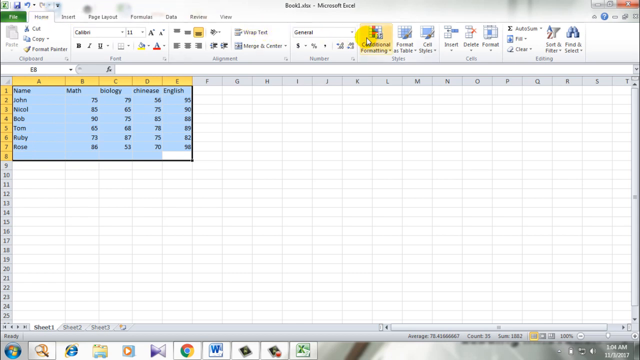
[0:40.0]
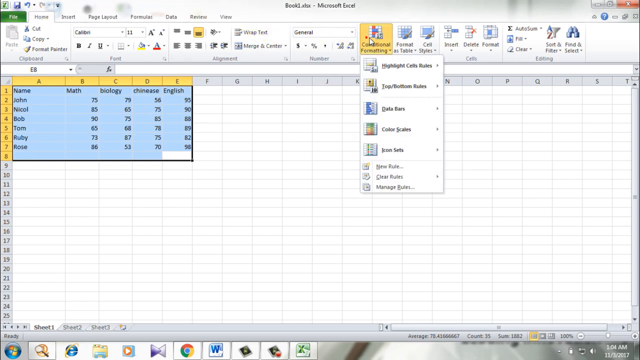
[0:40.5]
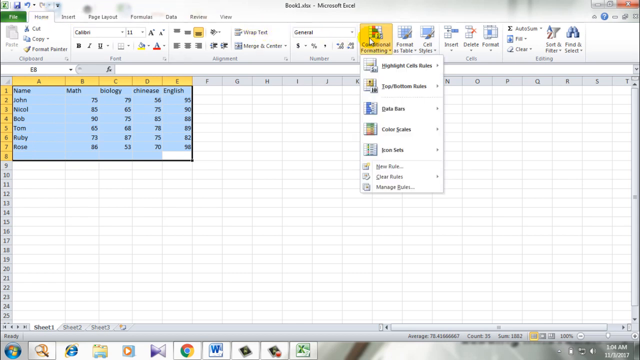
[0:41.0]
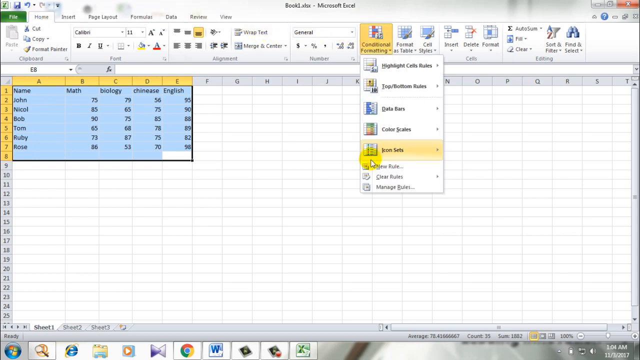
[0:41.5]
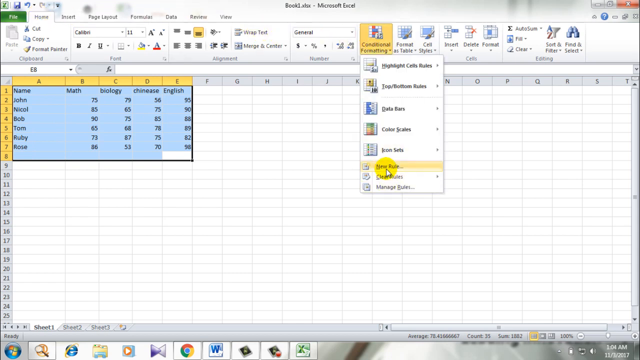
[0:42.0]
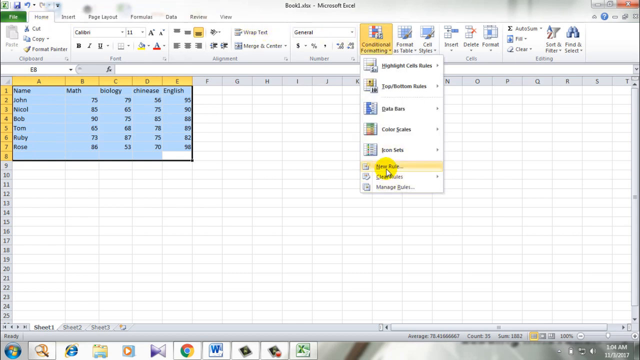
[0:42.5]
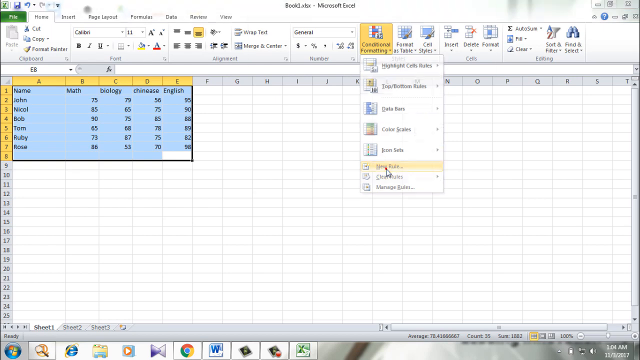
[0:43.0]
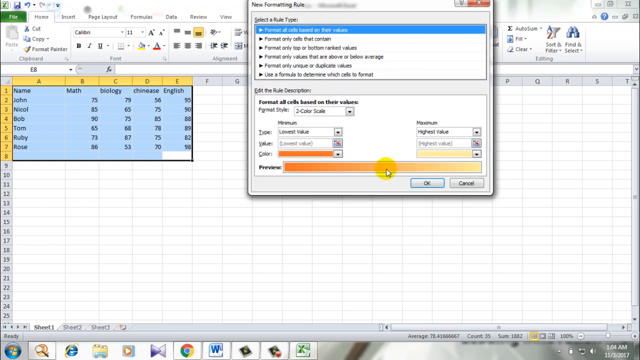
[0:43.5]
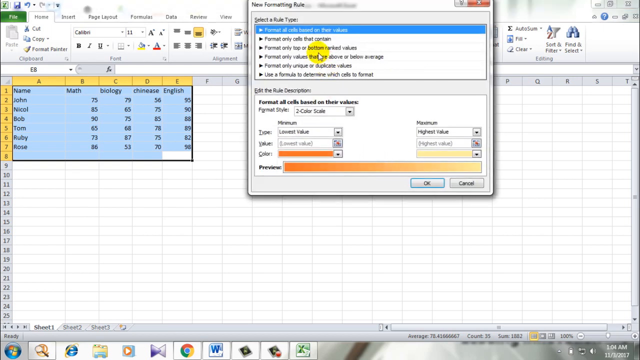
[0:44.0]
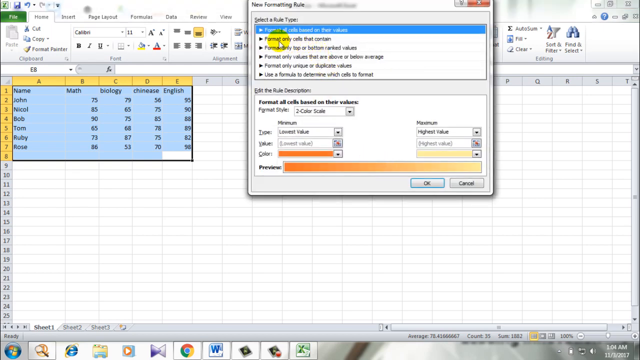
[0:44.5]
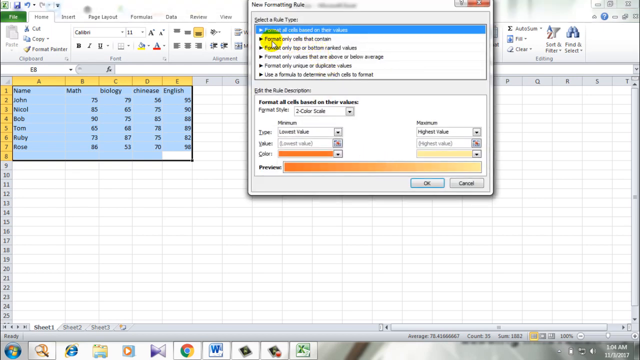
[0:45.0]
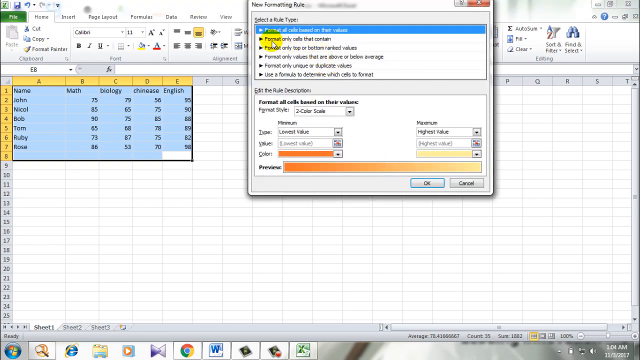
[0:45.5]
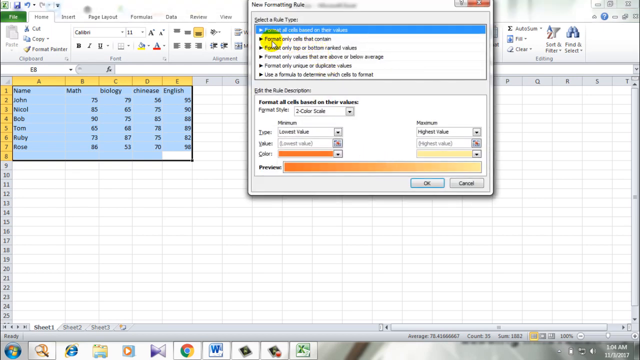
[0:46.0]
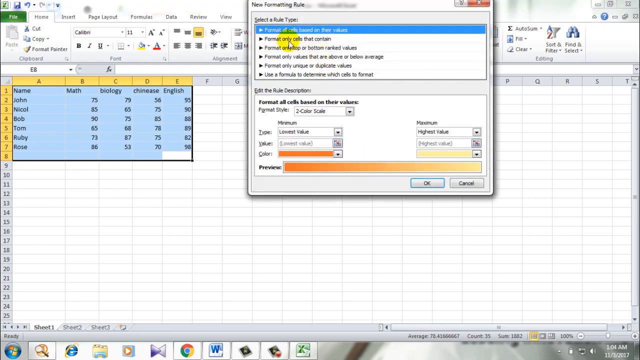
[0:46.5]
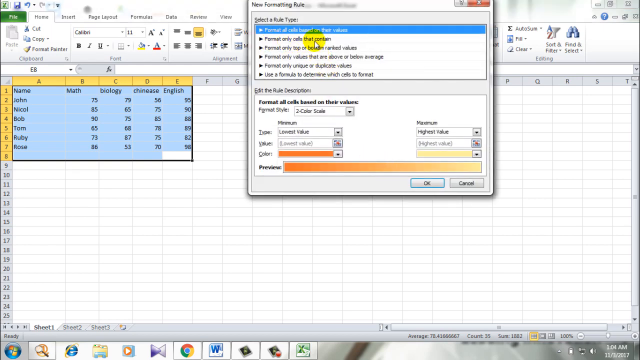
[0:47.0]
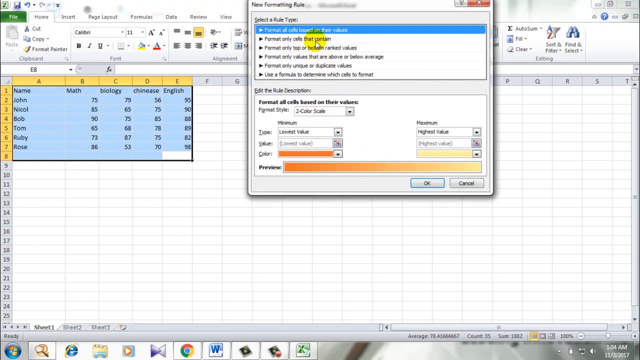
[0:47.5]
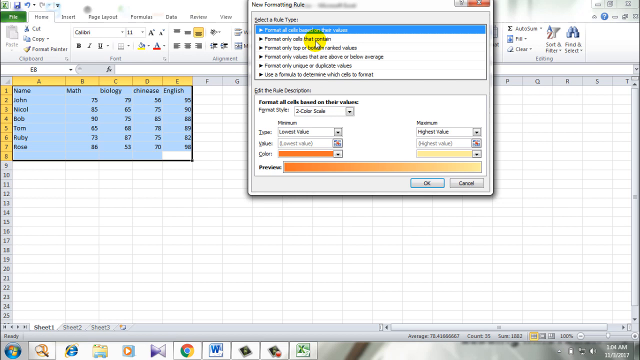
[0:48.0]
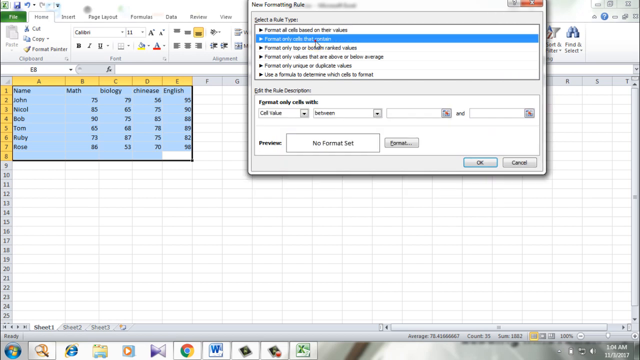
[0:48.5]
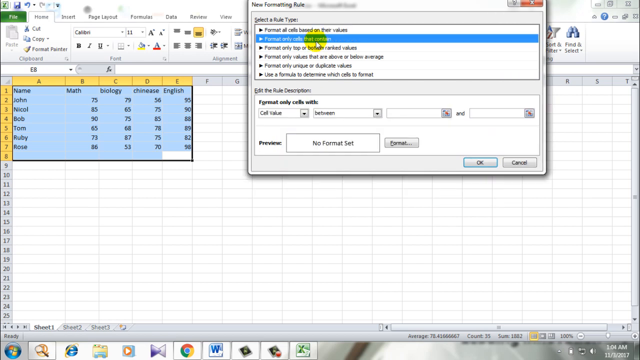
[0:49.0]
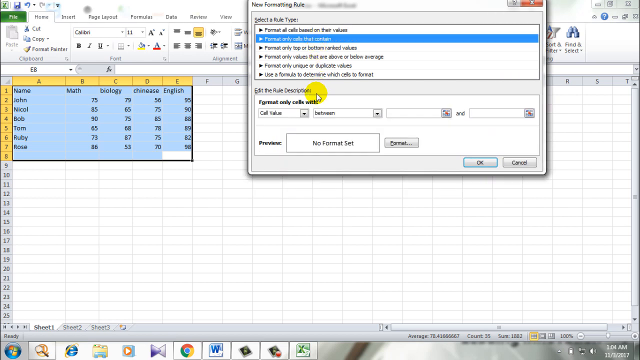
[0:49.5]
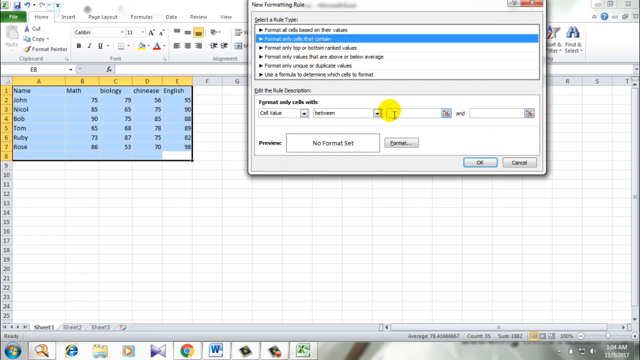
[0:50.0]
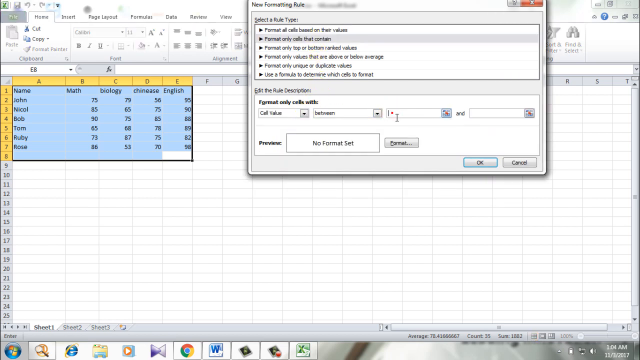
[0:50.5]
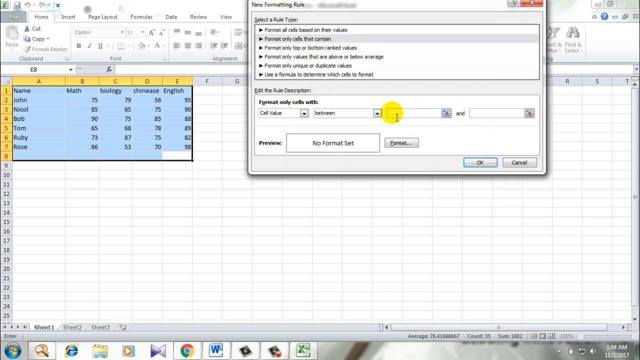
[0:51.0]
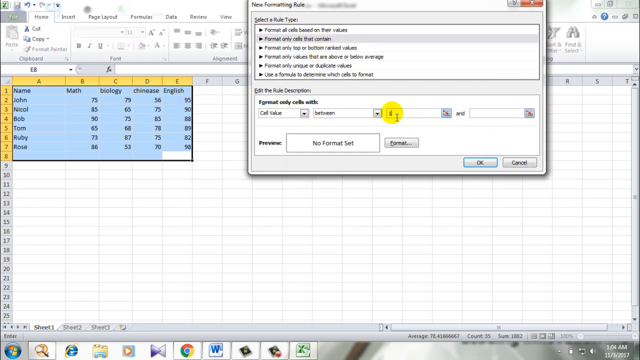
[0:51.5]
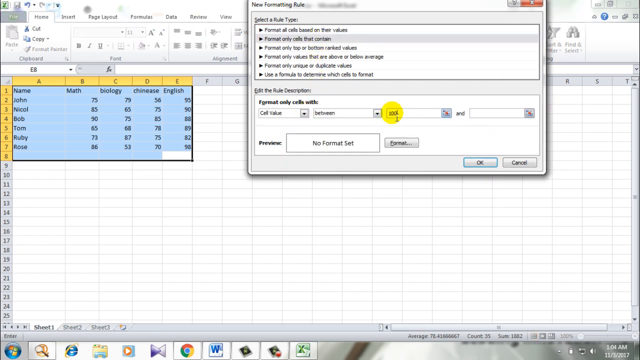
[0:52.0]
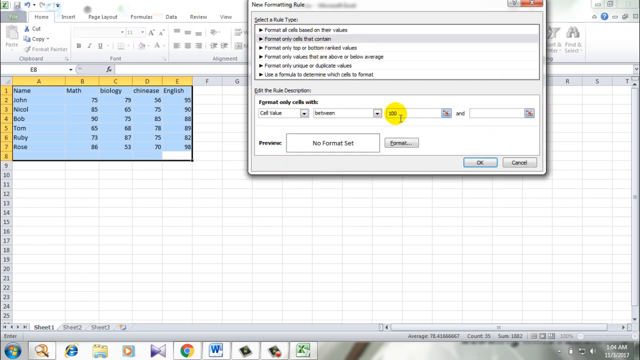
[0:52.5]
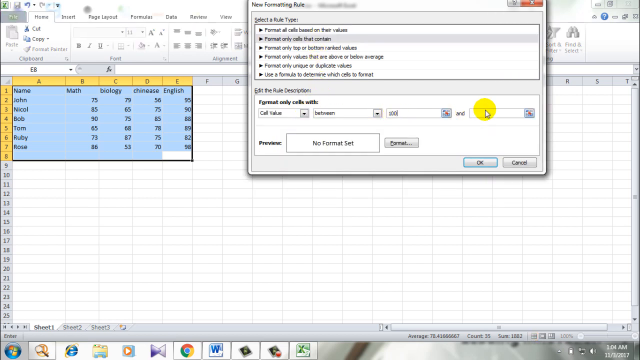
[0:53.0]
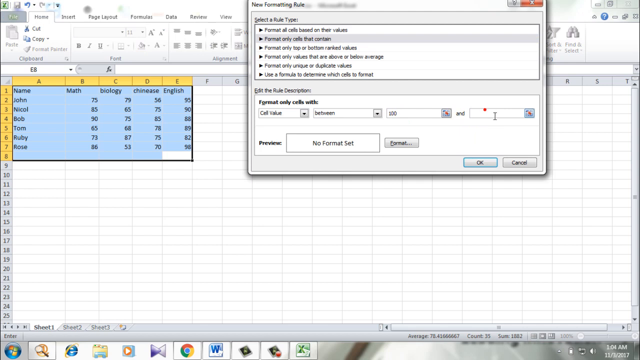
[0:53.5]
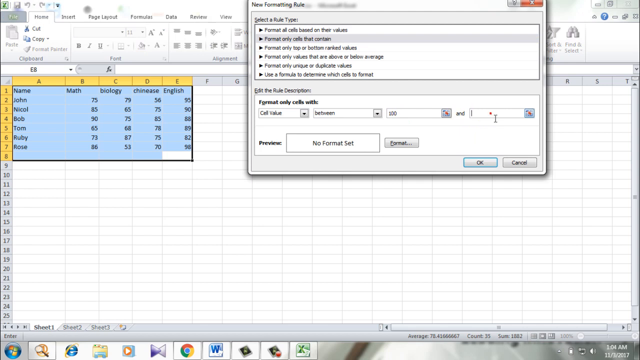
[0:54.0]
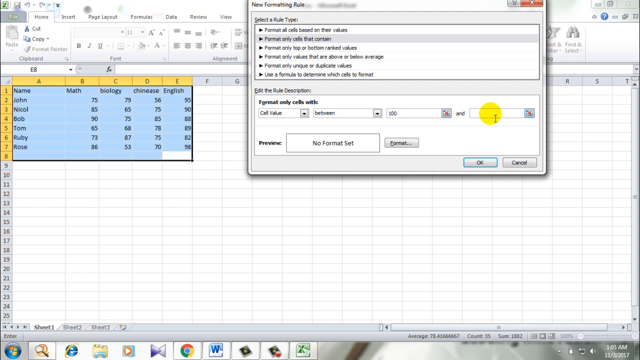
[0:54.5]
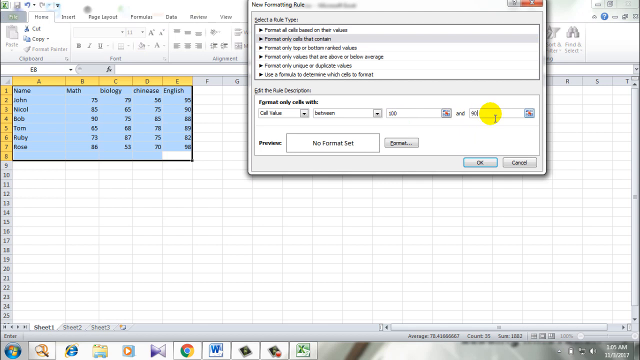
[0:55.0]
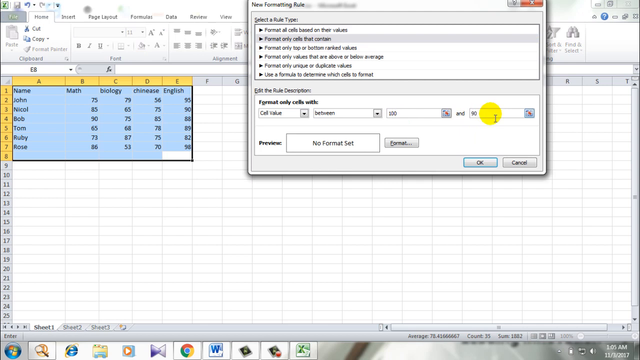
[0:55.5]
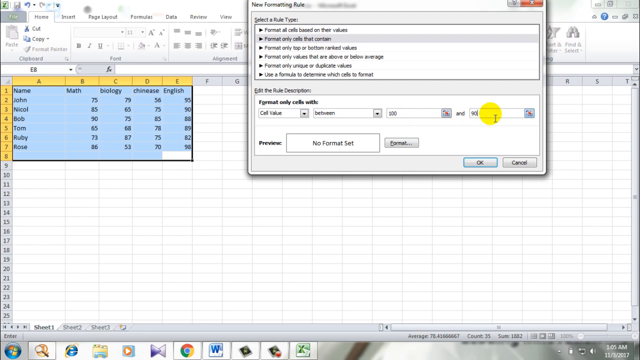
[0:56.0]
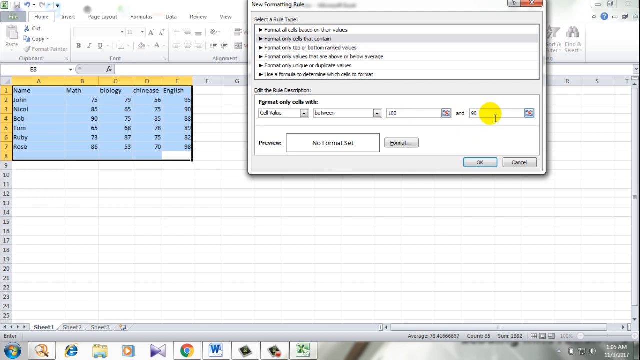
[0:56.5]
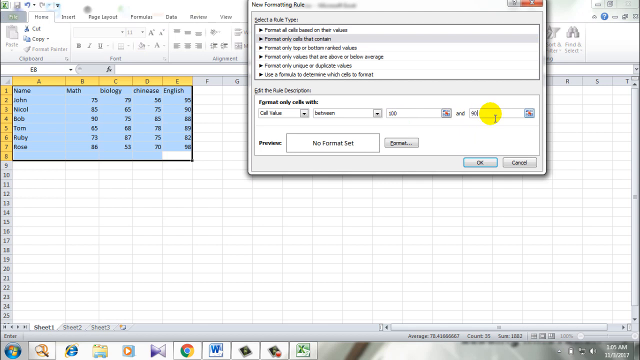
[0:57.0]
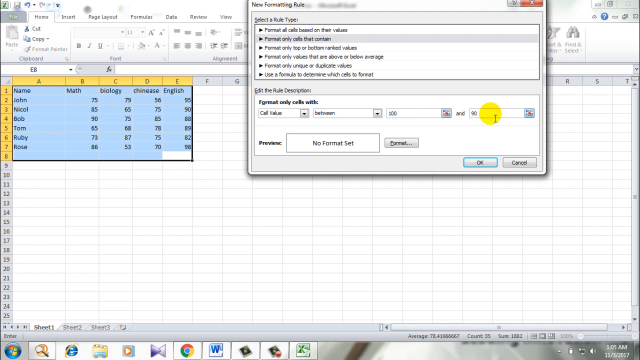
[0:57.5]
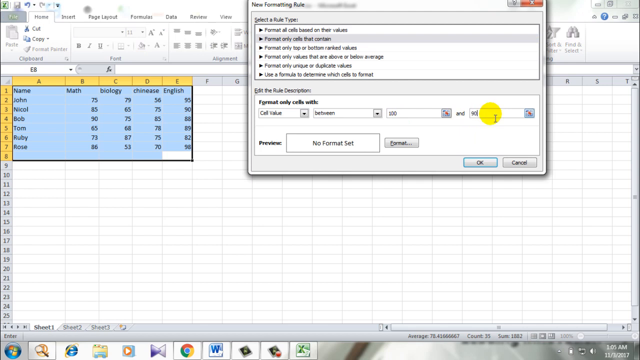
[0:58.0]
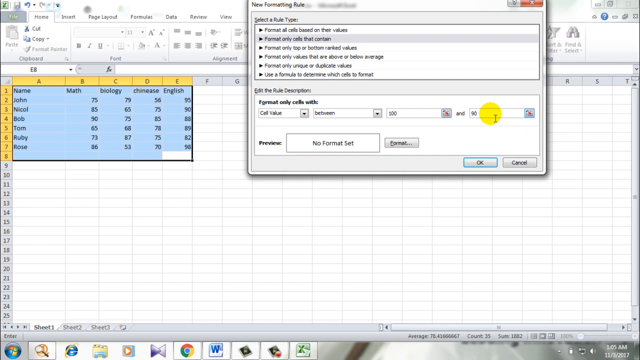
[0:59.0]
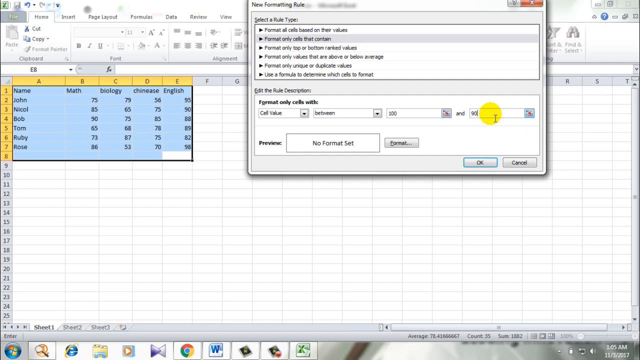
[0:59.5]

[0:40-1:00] With the Excel table of student scores in math, biology, Chinese and English highlighted from E8 up to A1, covering the whole table plus one row underneath, he goes up to the Conditional Formatting box in the Home ribbon and down to New Rule. He clicks the option that says "format only cells that contain", leaves it on "cell value between", and sets the range to 90 and 100.